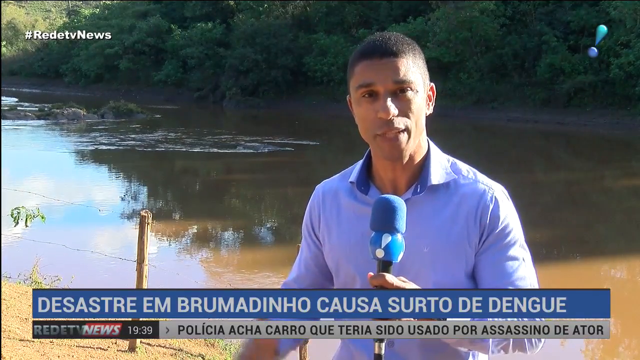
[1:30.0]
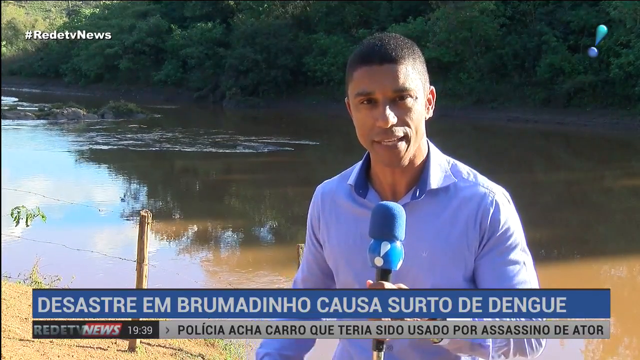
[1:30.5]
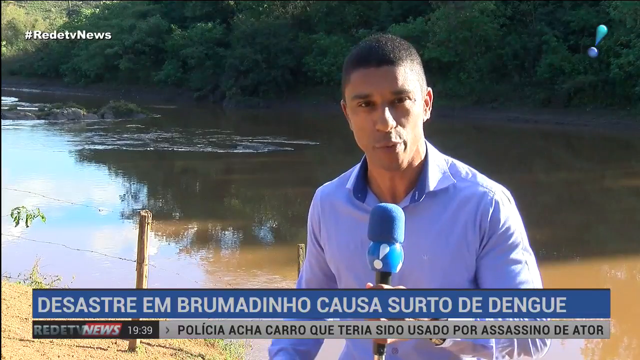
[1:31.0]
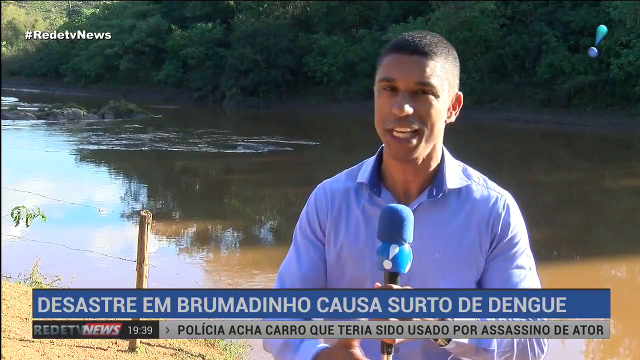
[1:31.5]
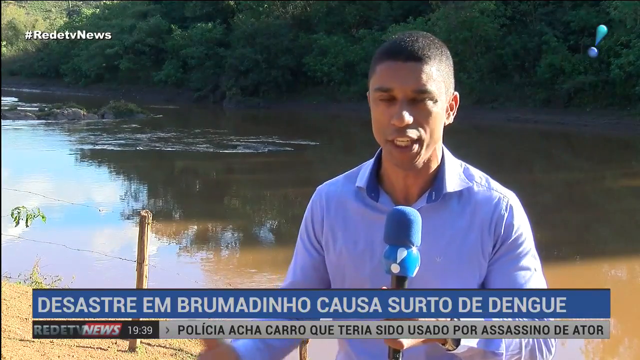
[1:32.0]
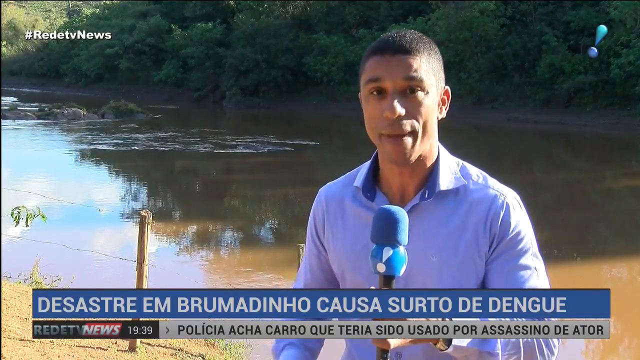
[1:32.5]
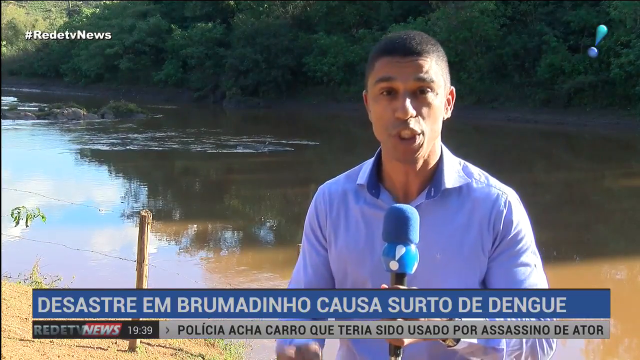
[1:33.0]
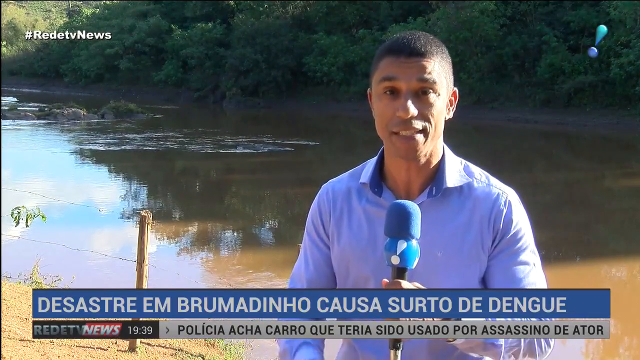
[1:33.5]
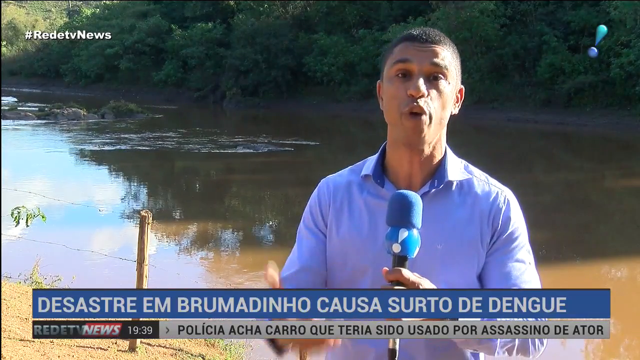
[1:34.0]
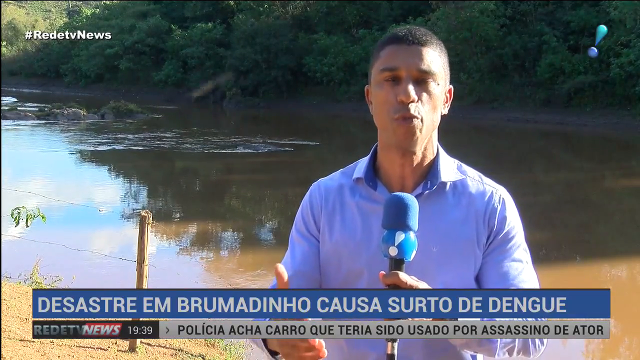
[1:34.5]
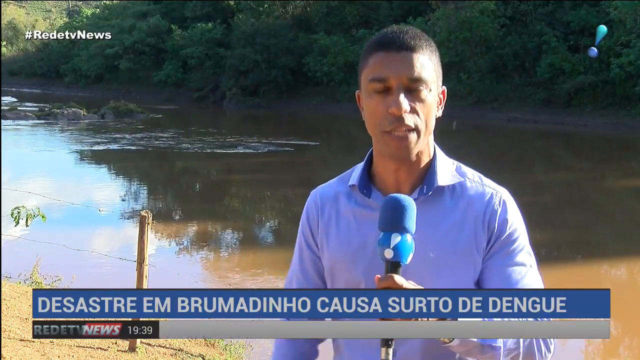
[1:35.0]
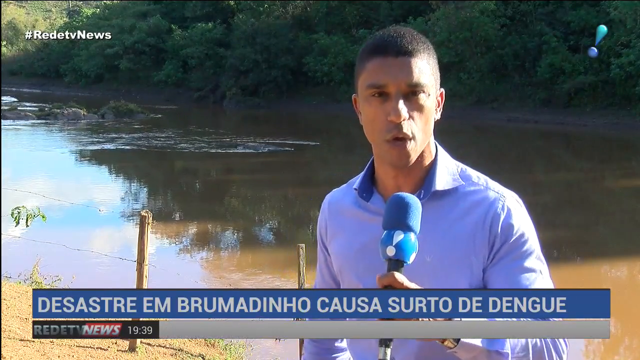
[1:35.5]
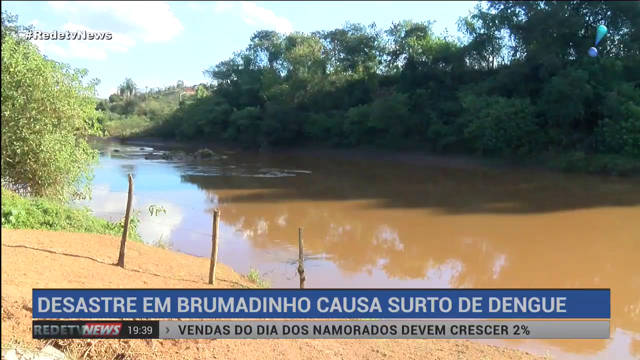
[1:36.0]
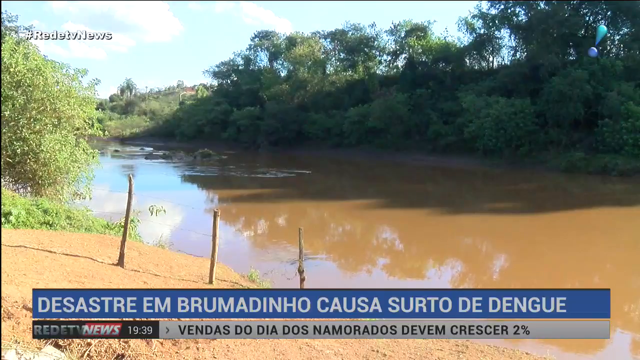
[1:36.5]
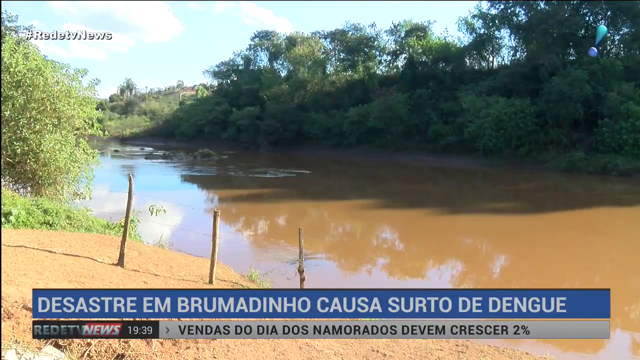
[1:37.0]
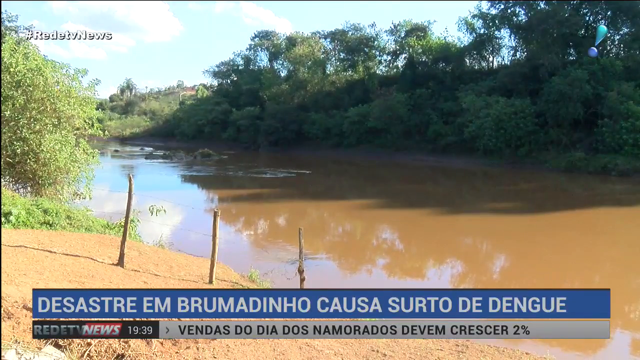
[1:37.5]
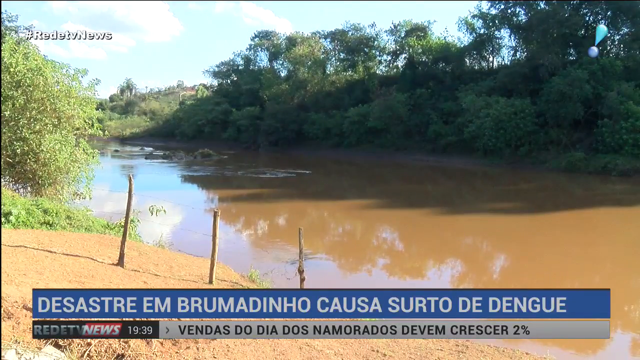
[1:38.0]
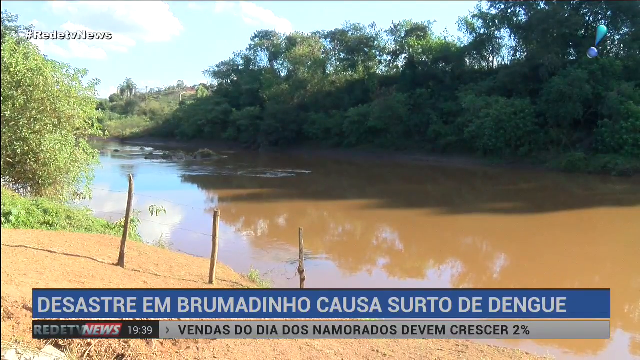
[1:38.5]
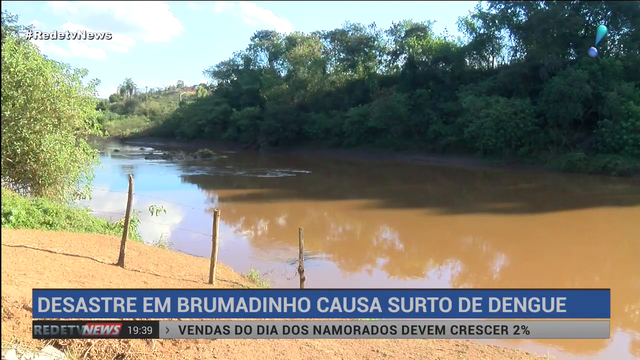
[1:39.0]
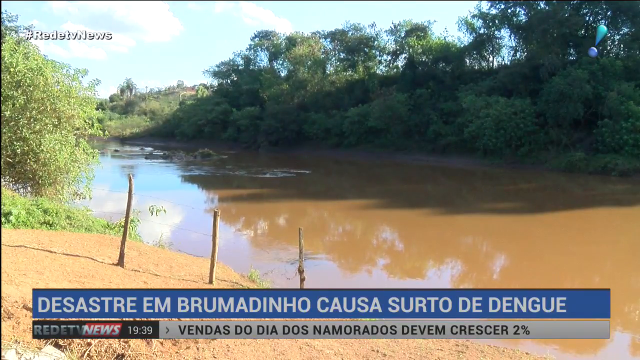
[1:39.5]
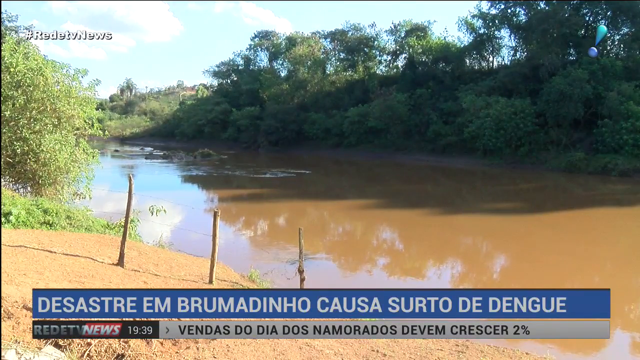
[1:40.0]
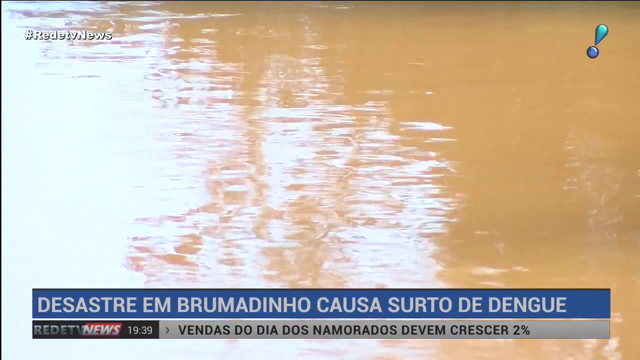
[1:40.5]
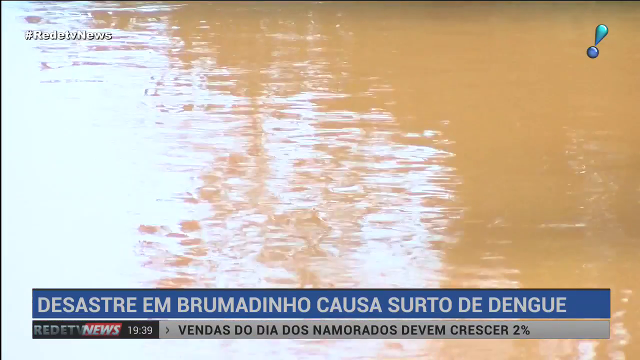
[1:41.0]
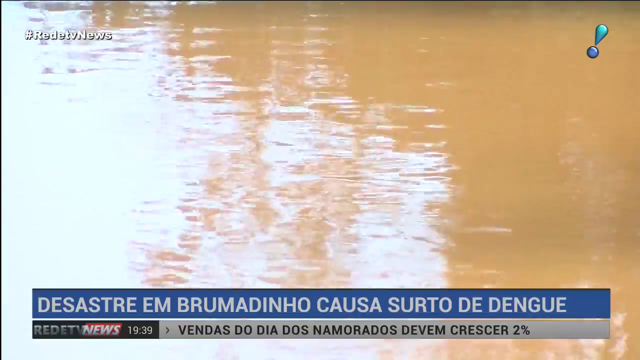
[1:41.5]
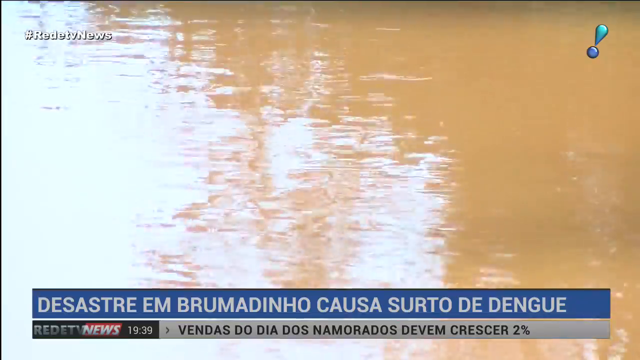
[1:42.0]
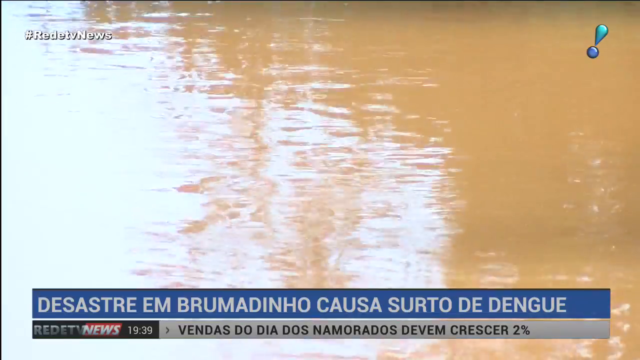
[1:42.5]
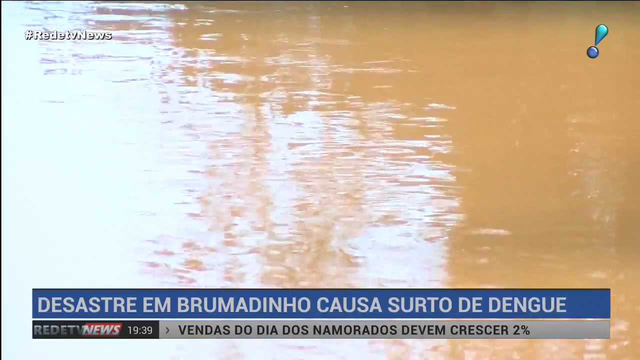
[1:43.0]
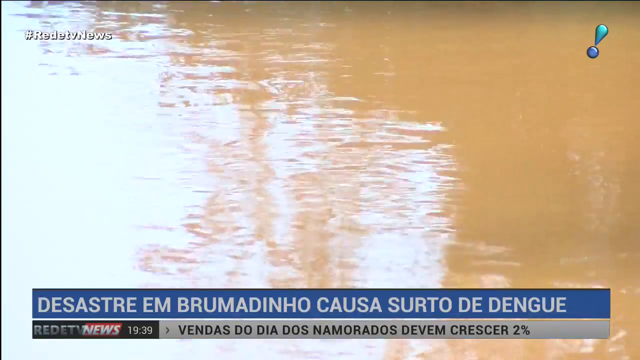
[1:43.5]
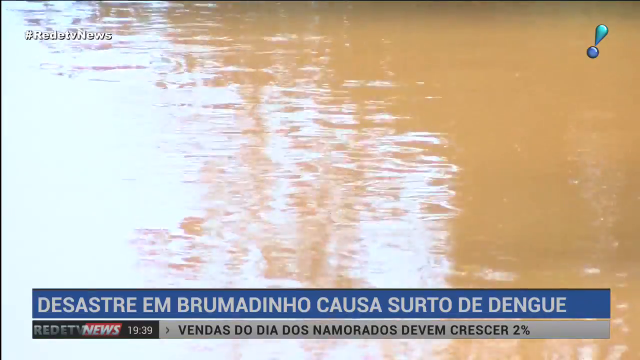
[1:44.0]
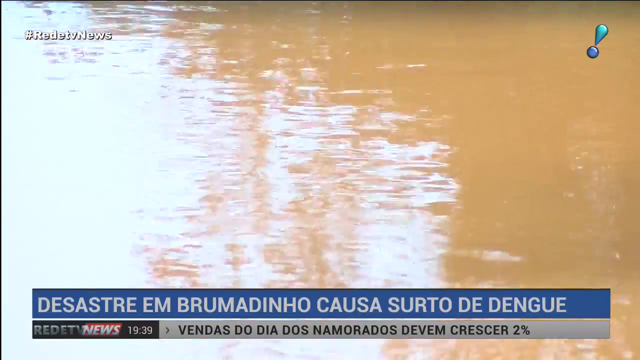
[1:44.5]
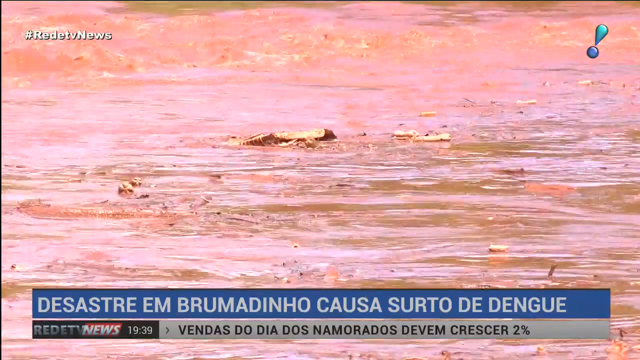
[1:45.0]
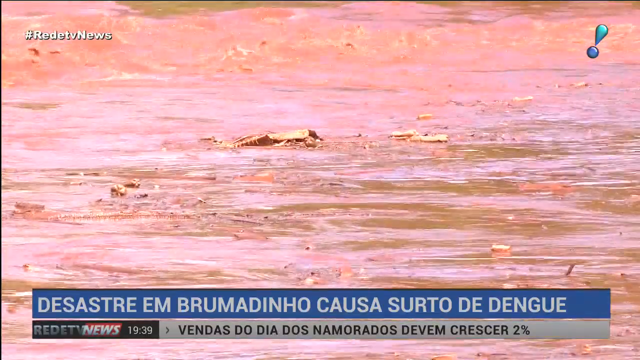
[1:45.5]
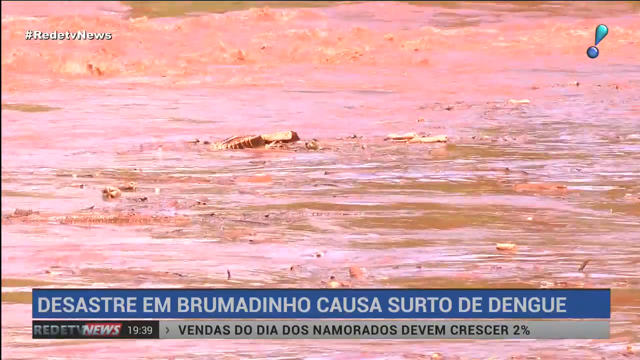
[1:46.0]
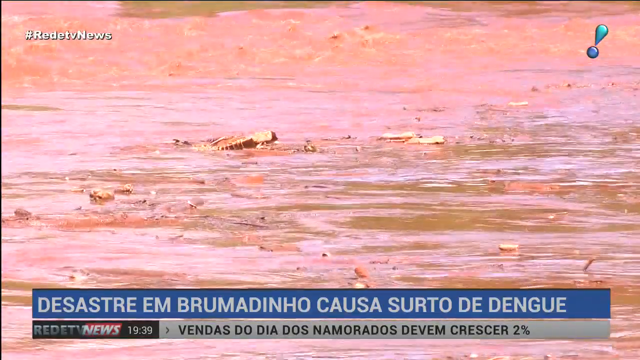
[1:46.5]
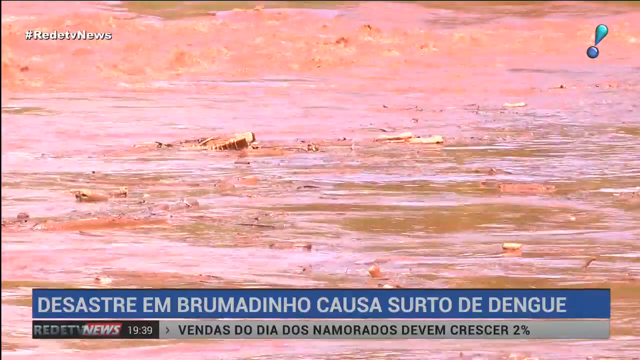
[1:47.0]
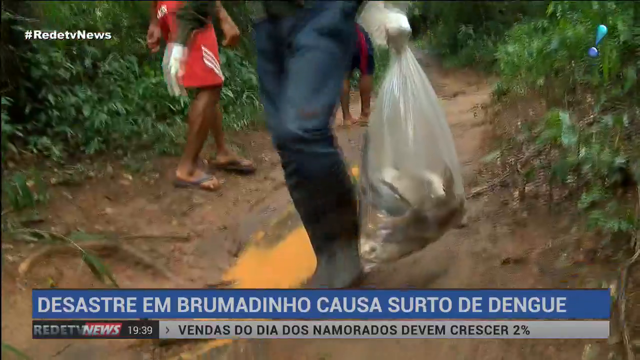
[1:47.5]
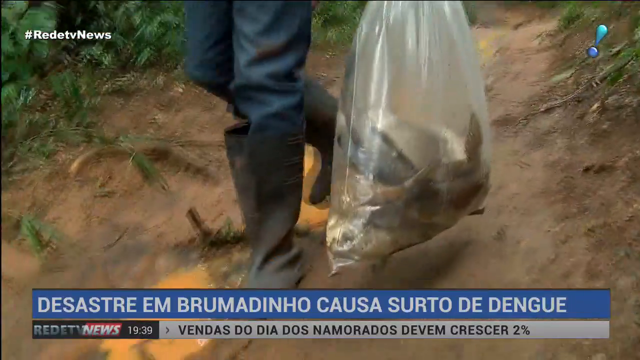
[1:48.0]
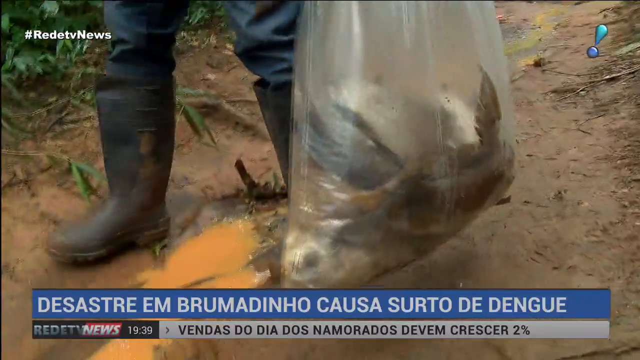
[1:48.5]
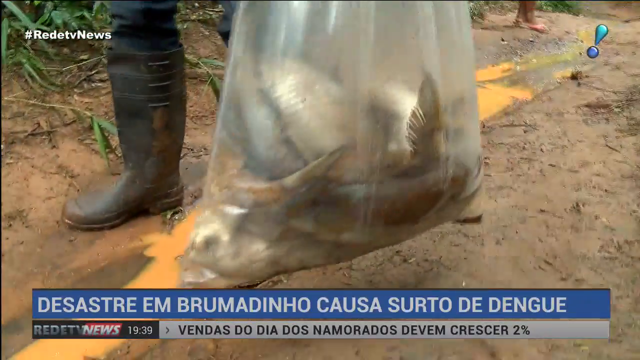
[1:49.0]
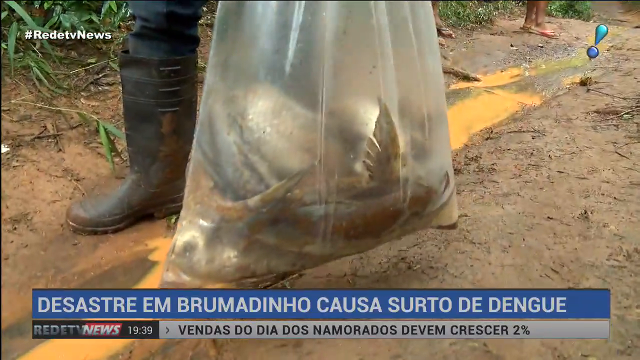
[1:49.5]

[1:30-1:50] The African American reporter, holding a microphone, gestures with his hands as he talks. He shows the lake, with fencing visible. The lake is very dirty, with brown water and a lot of debris and garbage floating in it, apparently including a lot of sticks. A man walks by, seen only from his shoes, which look almost like Hunter boots; he carries a garbage bag whose contents are unclear, possibly garbage or fish. There are many trees behind the very brown lake.